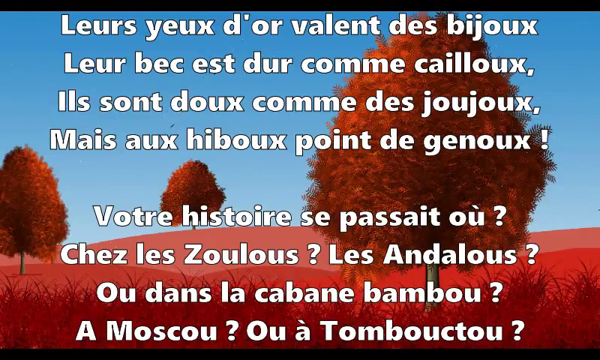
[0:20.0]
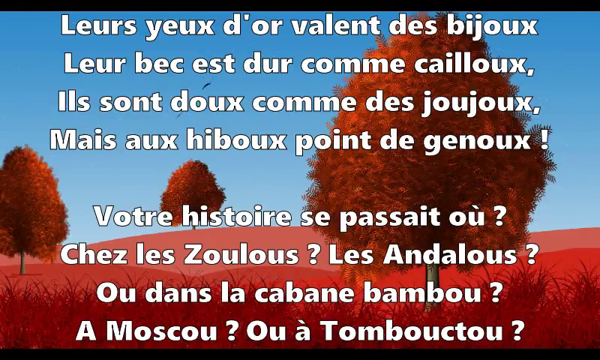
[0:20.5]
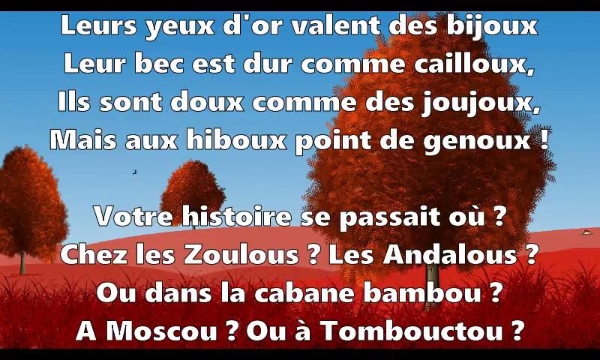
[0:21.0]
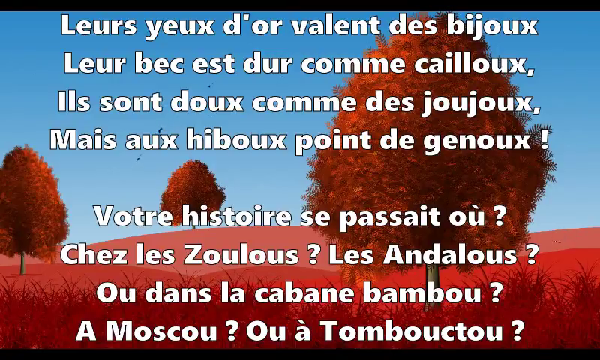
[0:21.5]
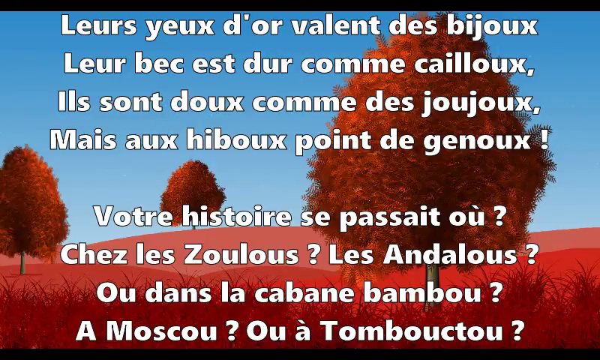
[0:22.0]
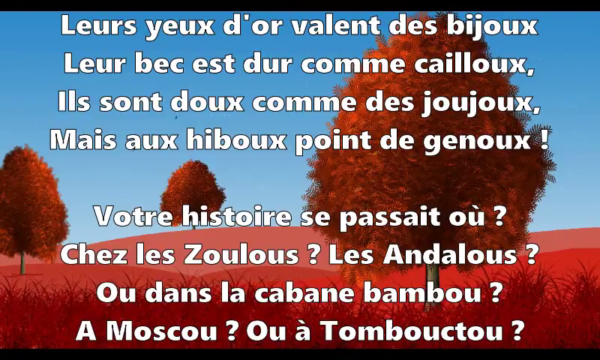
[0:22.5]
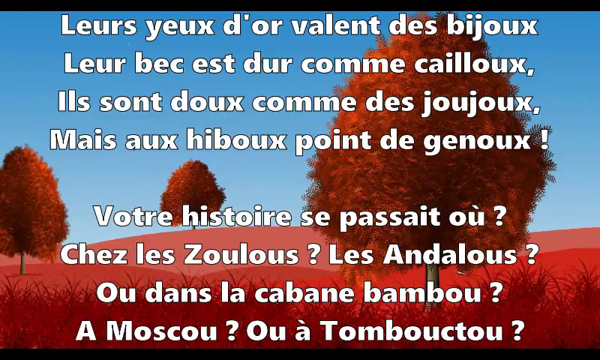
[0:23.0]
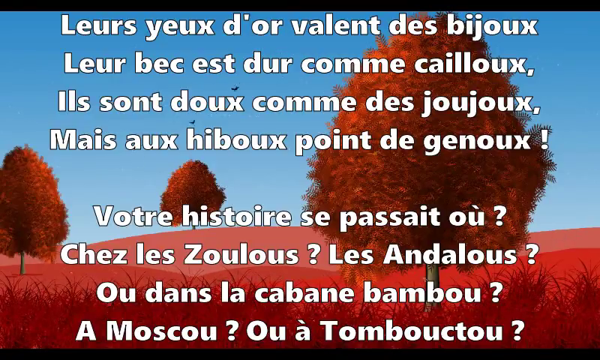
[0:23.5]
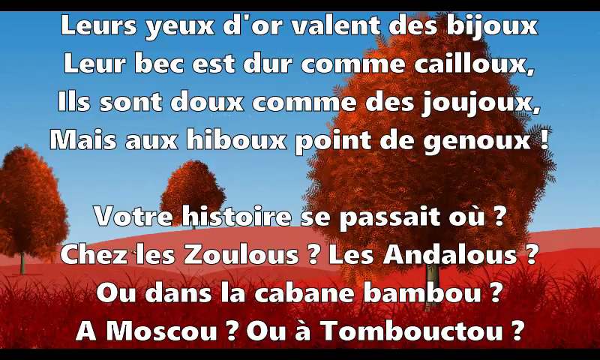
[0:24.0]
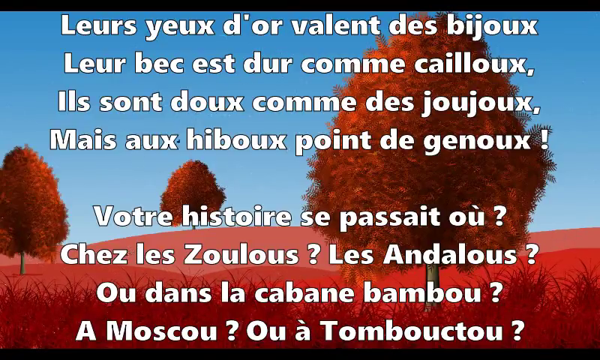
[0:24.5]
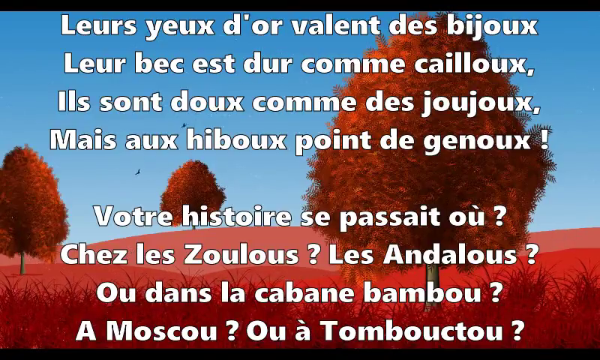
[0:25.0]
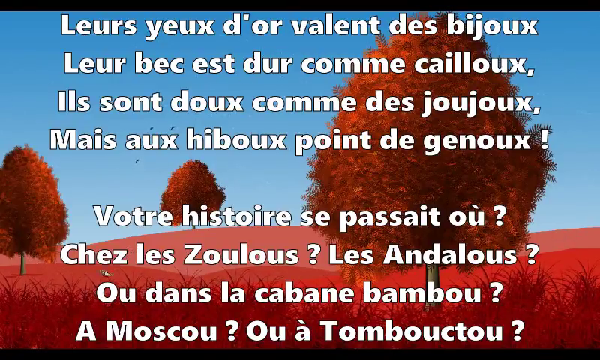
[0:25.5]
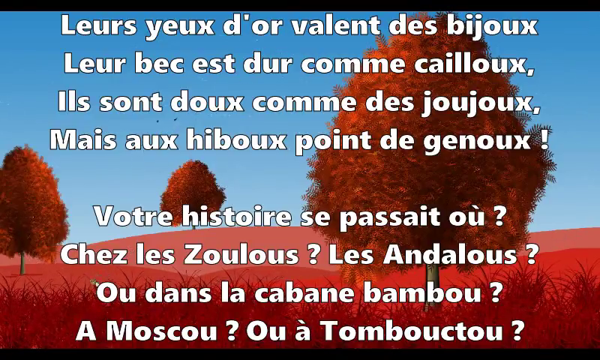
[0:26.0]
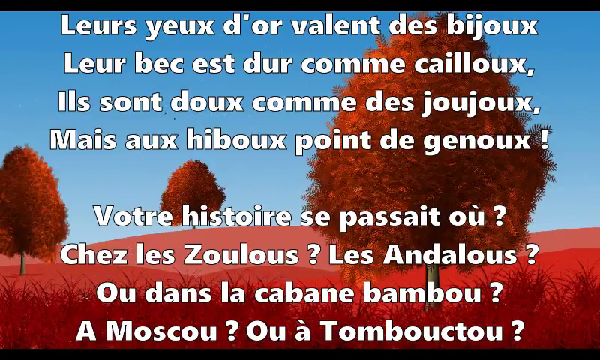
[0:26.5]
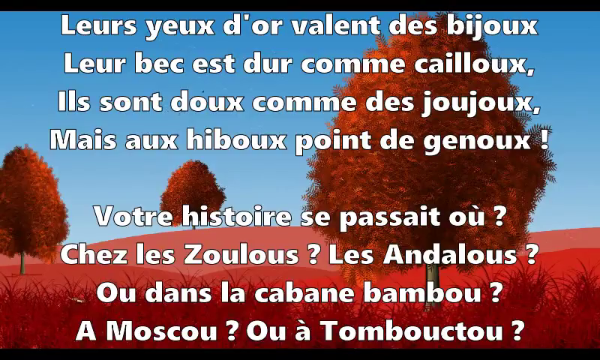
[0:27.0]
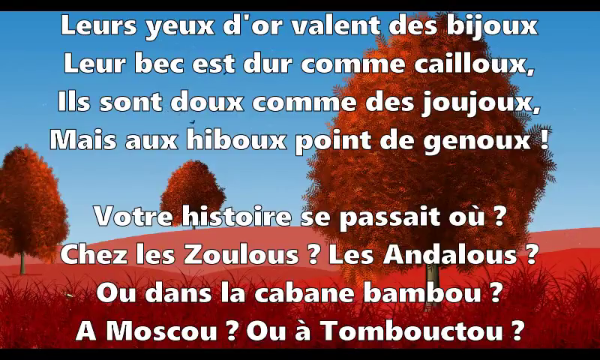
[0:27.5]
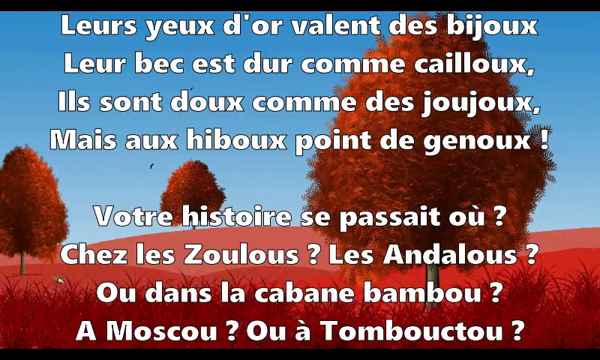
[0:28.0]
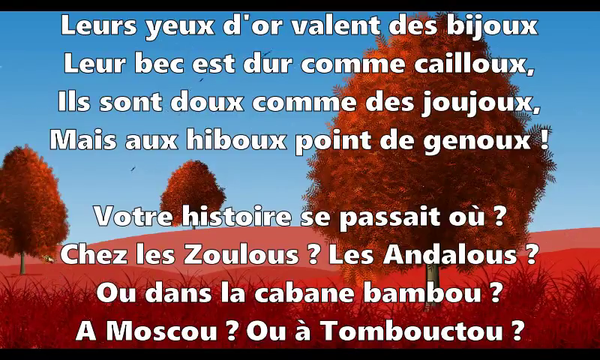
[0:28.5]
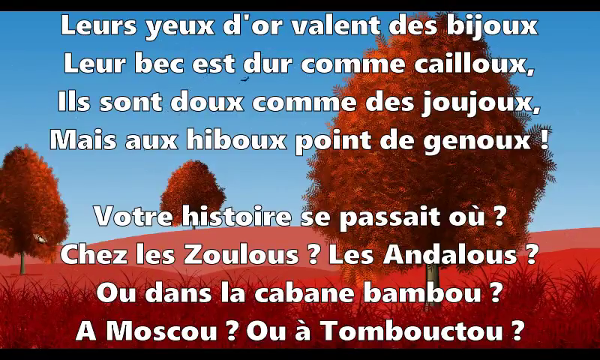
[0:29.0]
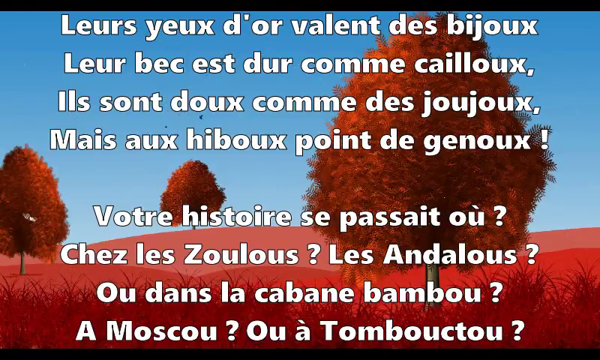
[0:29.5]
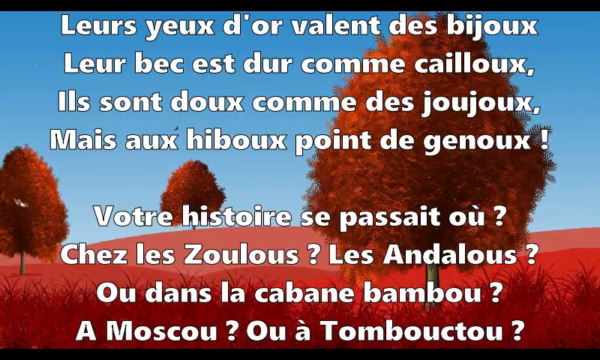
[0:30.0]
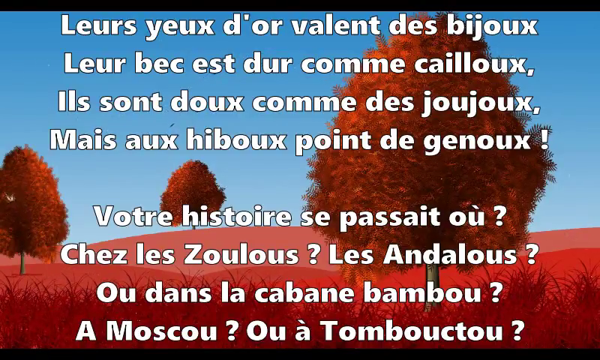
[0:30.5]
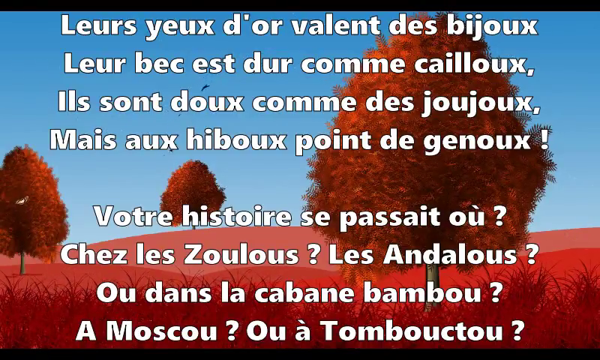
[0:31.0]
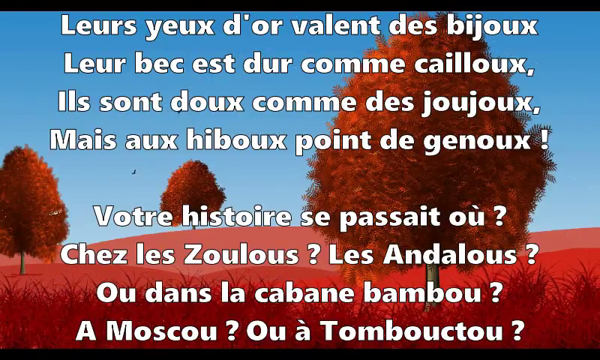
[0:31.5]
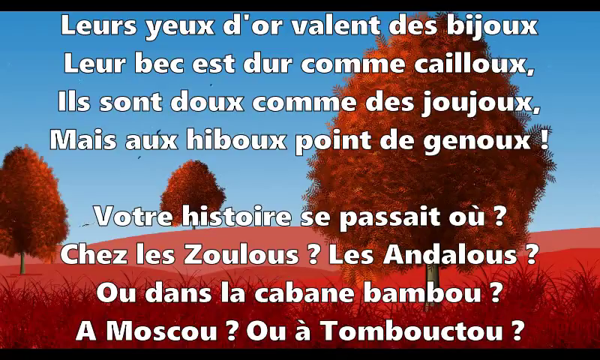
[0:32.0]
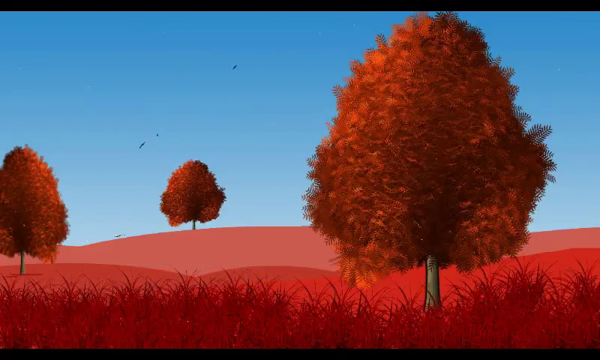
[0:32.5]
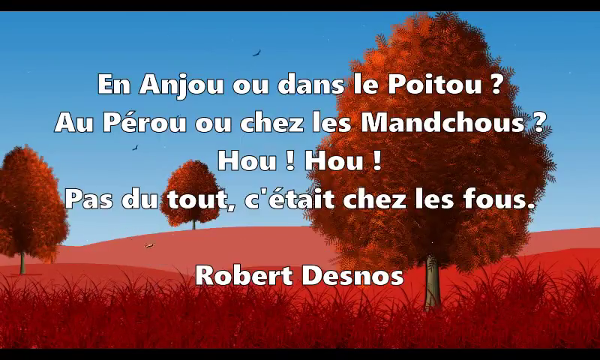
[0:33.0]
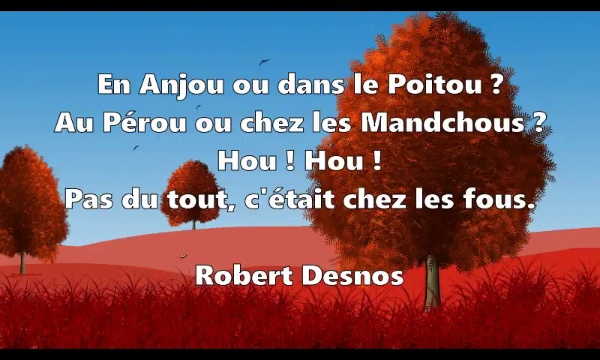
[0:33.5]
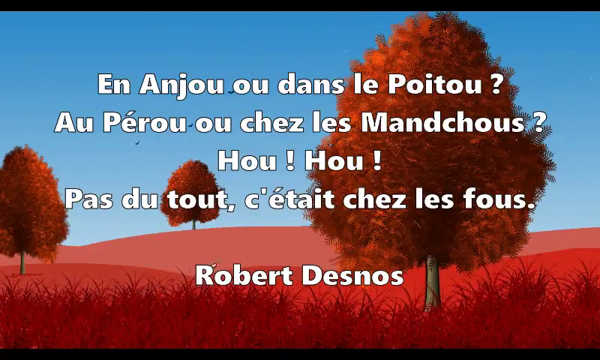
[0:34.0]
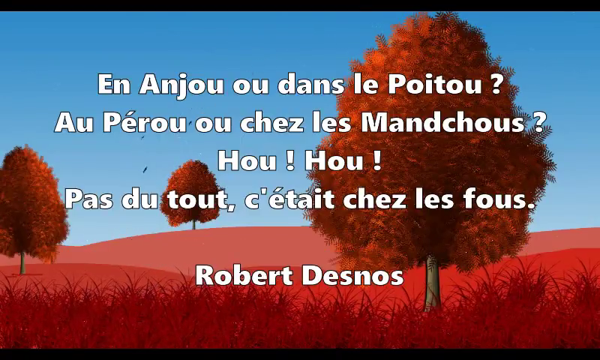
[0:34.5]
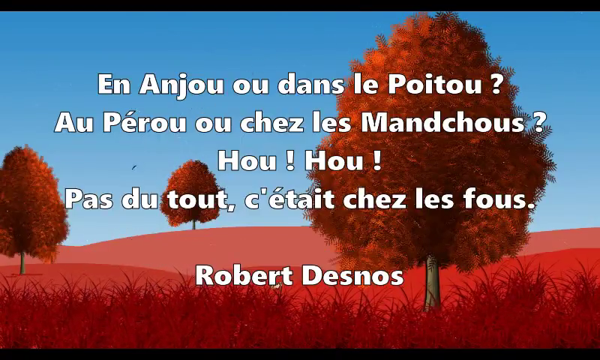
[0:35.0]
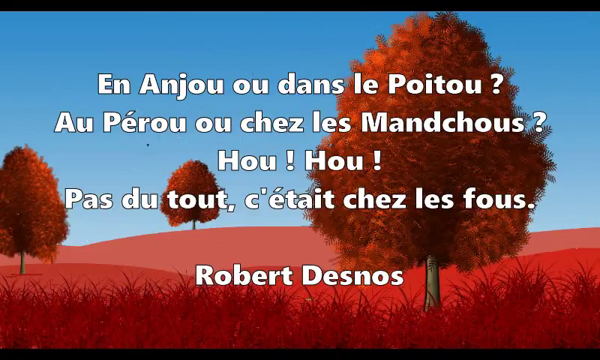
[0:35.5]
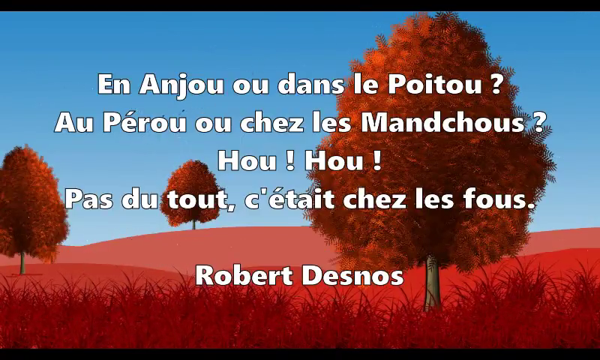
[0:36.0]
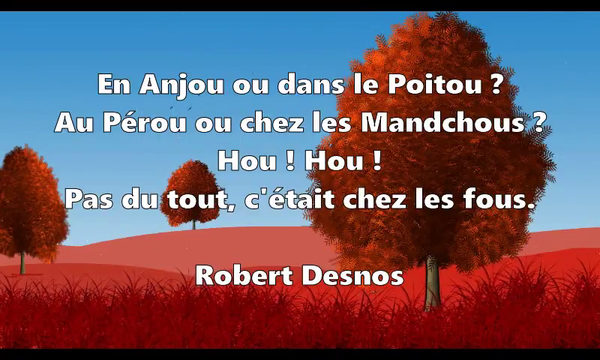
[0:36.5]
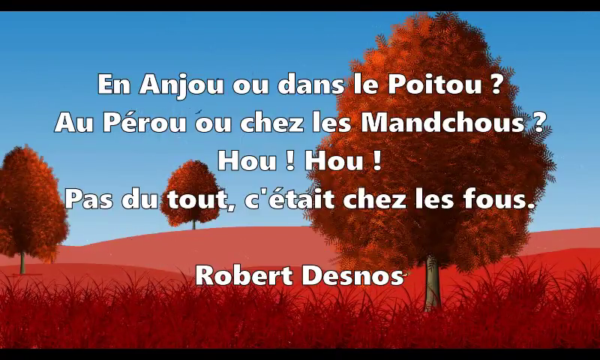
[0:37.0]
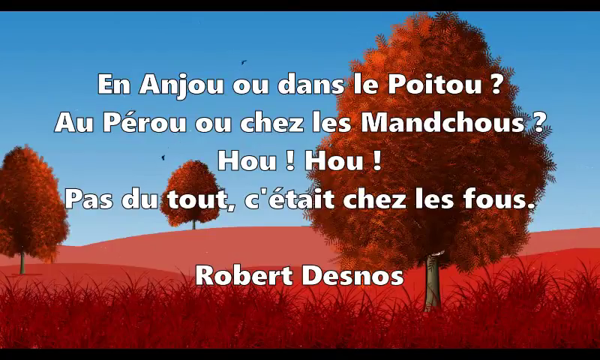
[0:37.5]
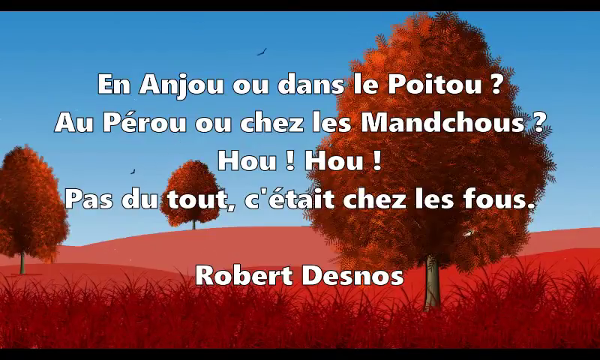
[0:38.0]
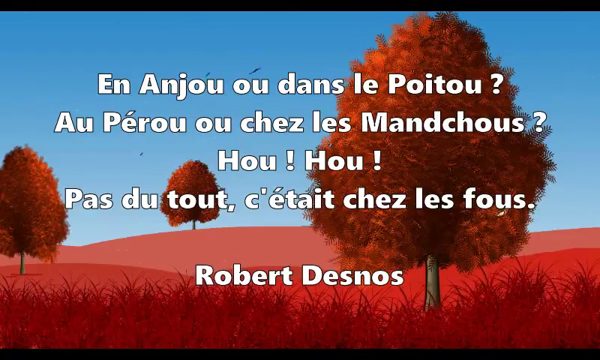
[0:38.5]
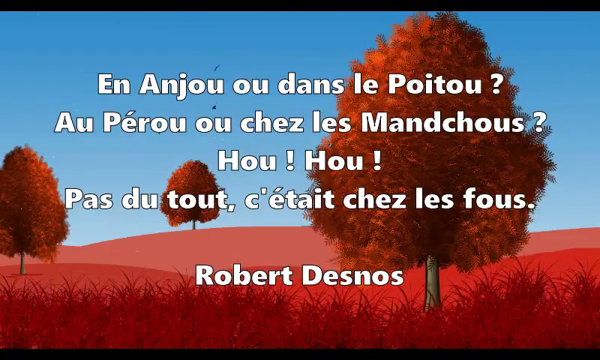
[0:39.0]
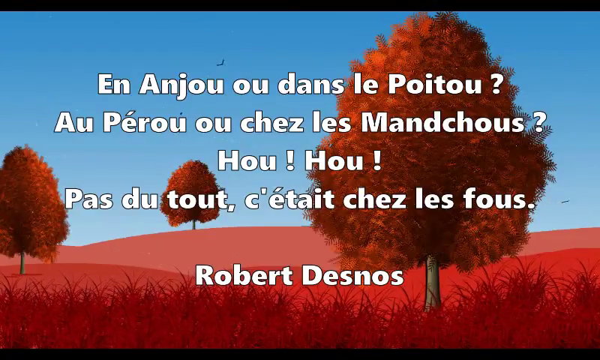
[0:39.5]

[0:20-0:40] A largely static image serves as the background, with text displayed over it. Two paragraphs of text, both in French, appear in bold white lettering with a thin black outline around each letter, standing out as the focal point over the image. The backdrop shows three orange-leafed trees spread out across the image, reddish grass below and a clear blue sky above. The image changes little: birds fly in the distance in the sky, and the grass at the bottom sways subtly back and forth. The main transition is when the paragraphs of text change, bringing a second set of information, also in French, with a person's name at the bottom that reads "Robert Desnos".